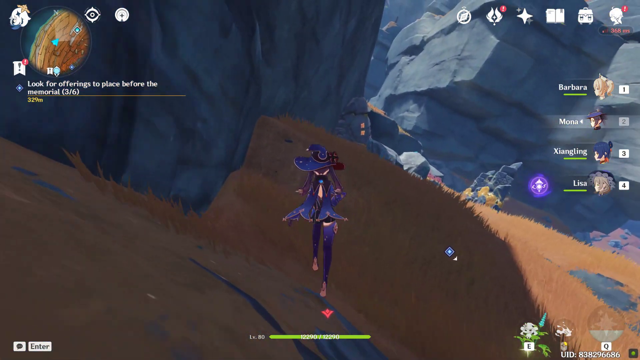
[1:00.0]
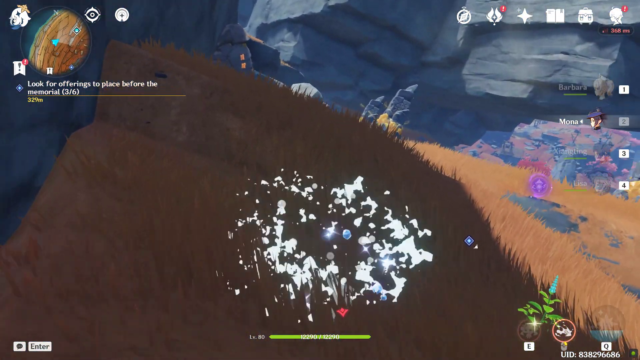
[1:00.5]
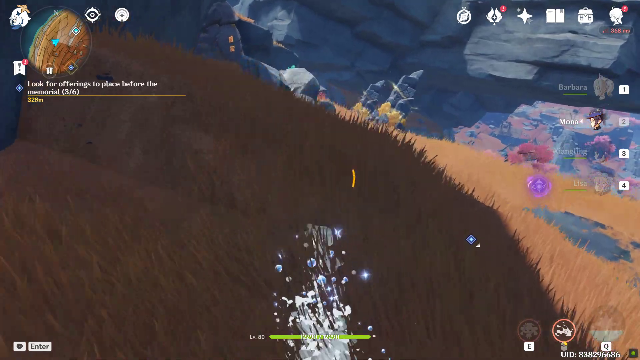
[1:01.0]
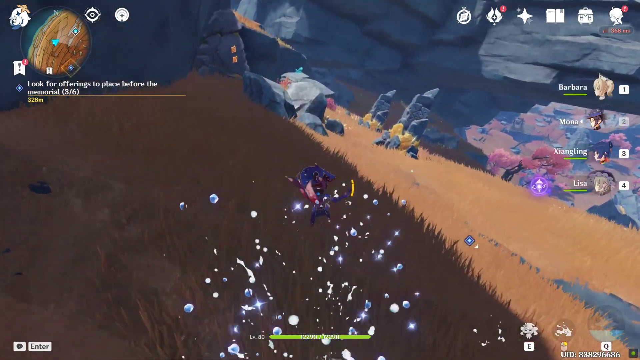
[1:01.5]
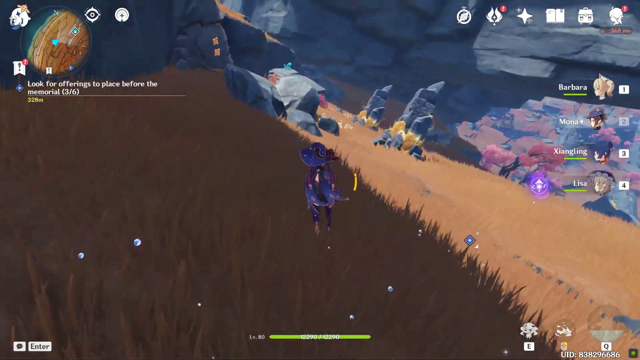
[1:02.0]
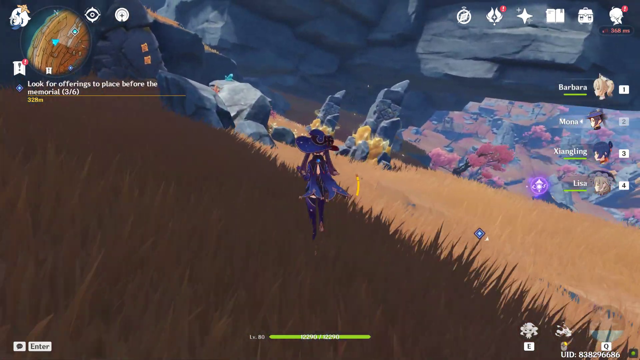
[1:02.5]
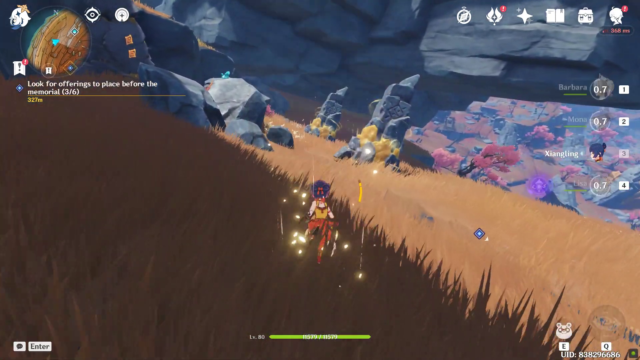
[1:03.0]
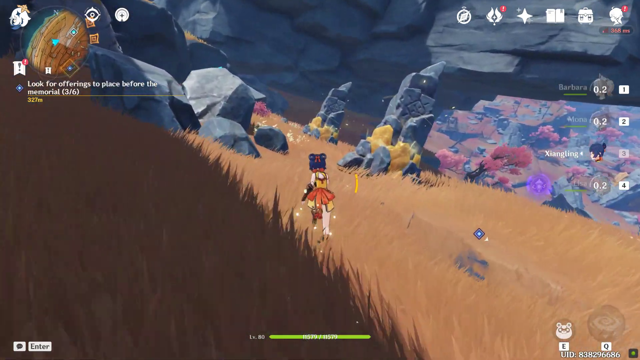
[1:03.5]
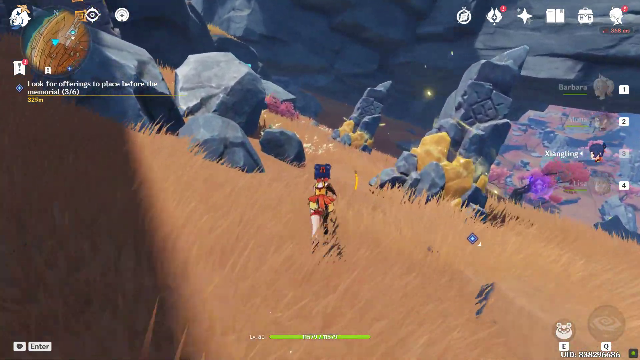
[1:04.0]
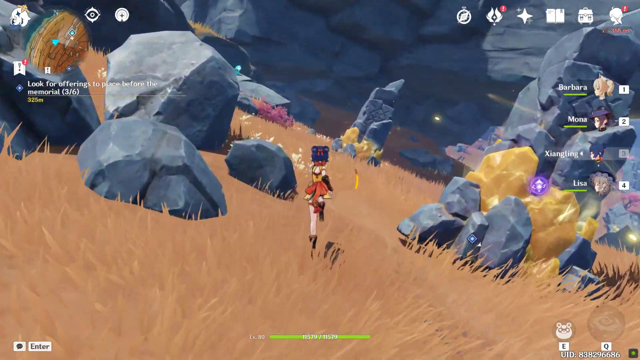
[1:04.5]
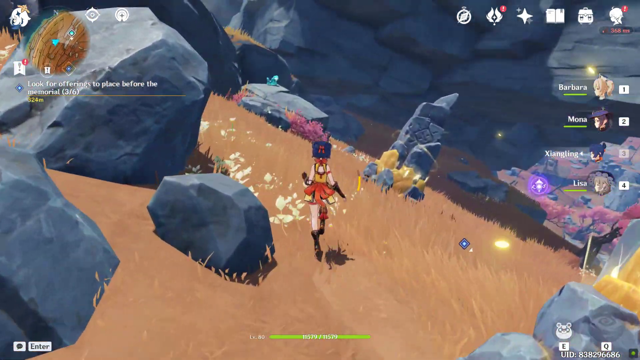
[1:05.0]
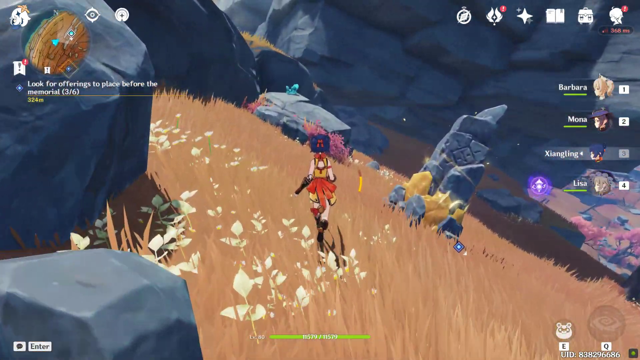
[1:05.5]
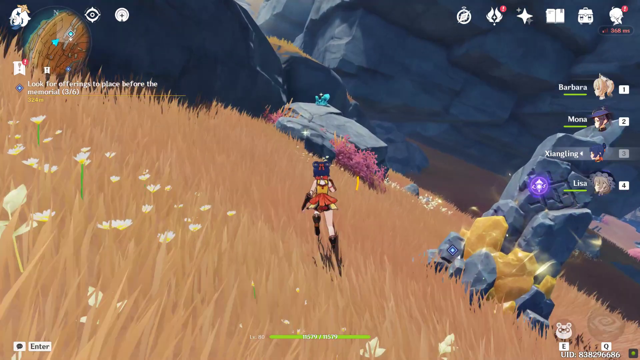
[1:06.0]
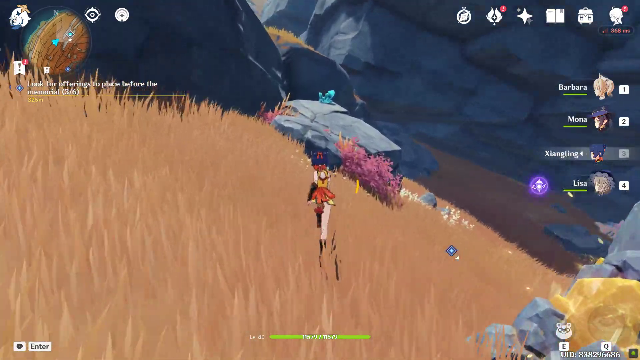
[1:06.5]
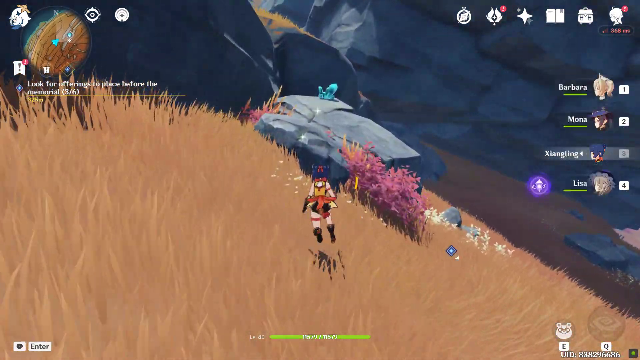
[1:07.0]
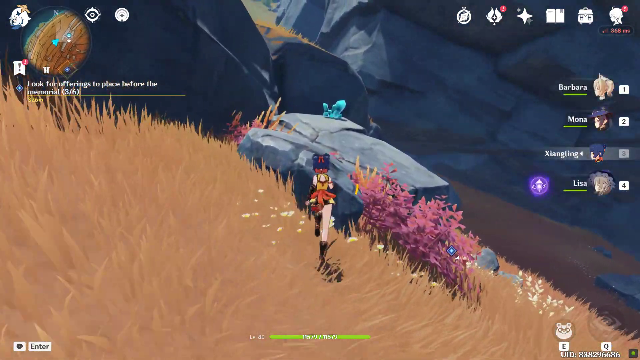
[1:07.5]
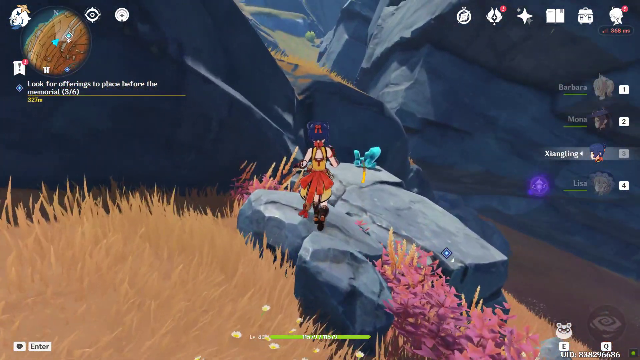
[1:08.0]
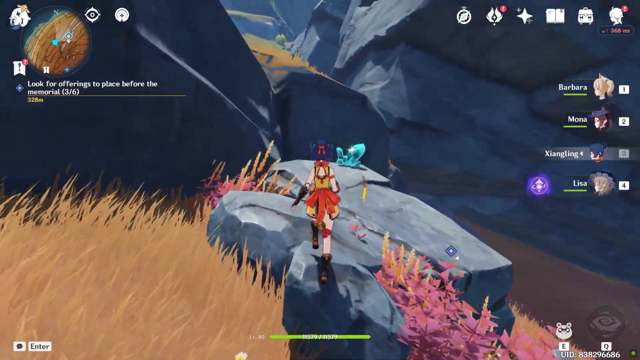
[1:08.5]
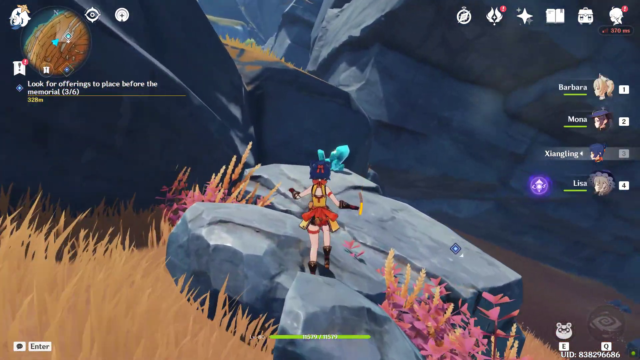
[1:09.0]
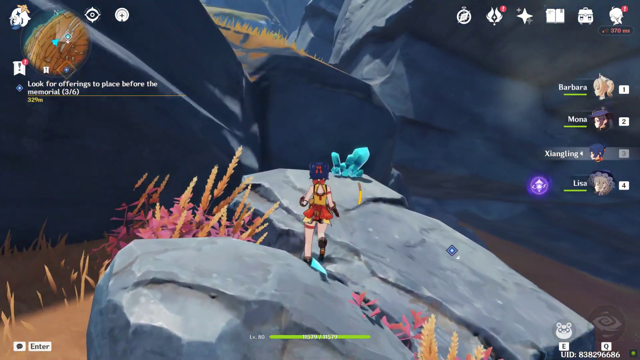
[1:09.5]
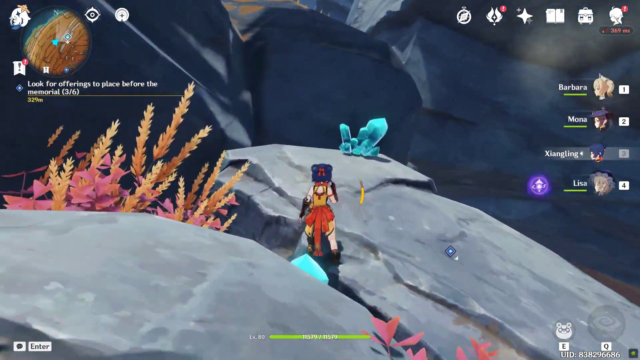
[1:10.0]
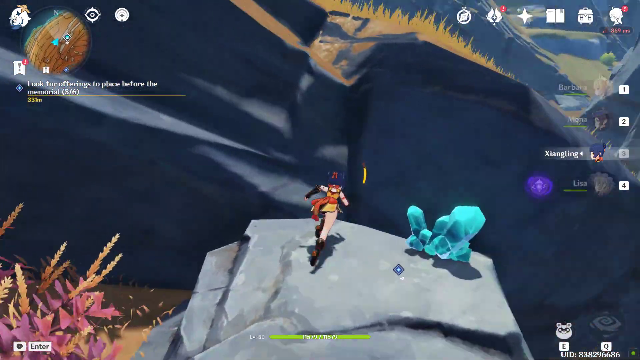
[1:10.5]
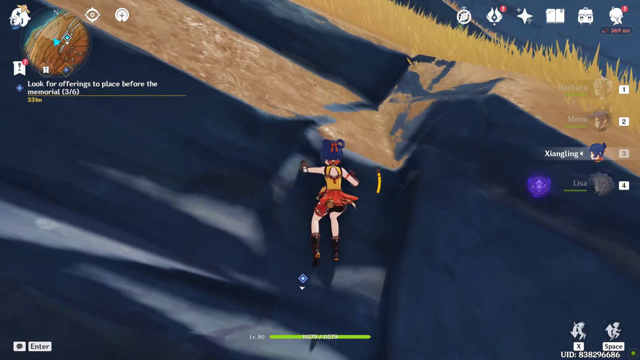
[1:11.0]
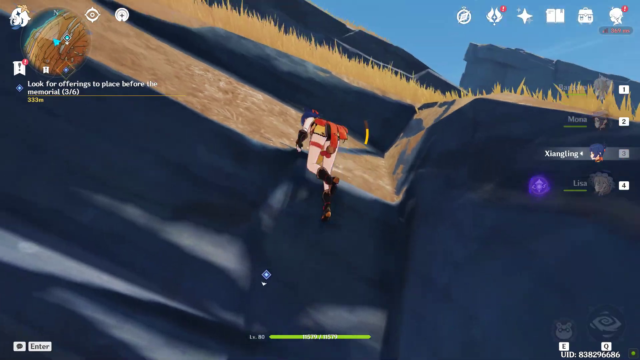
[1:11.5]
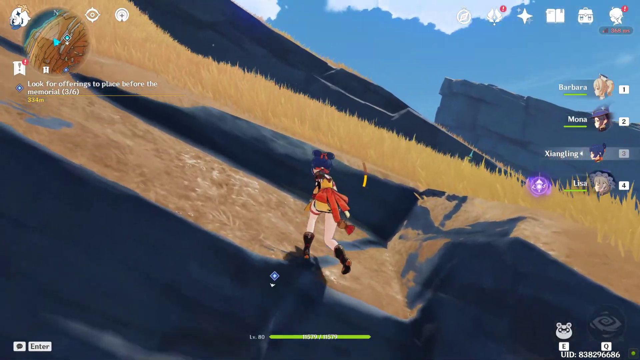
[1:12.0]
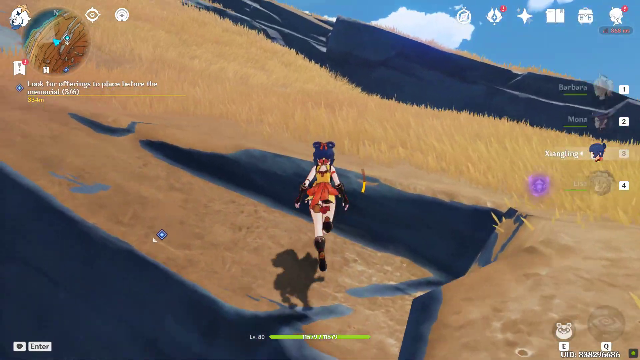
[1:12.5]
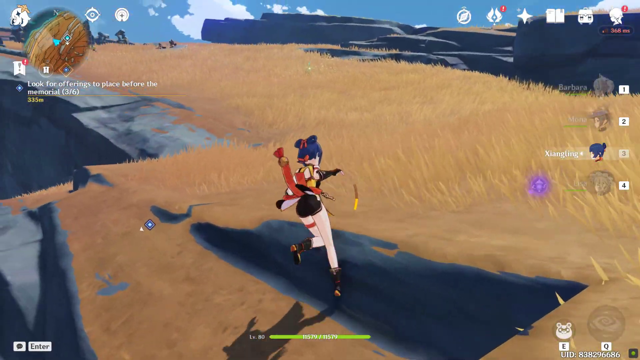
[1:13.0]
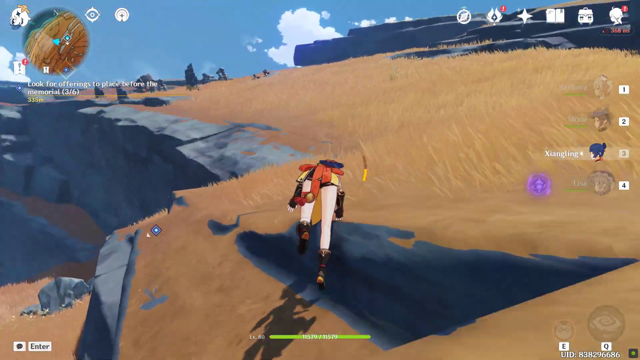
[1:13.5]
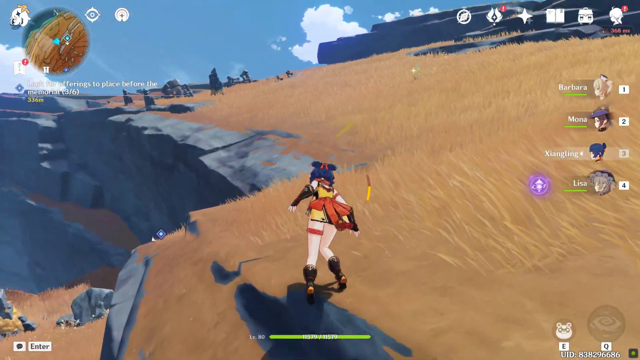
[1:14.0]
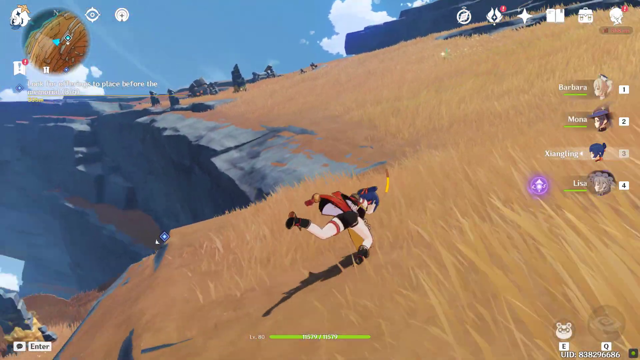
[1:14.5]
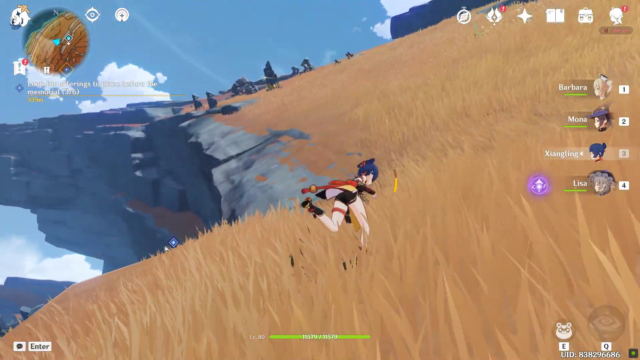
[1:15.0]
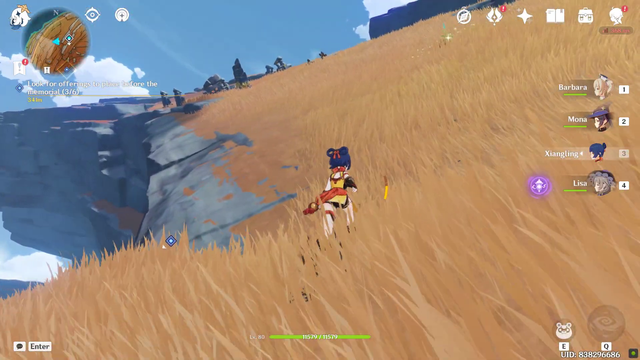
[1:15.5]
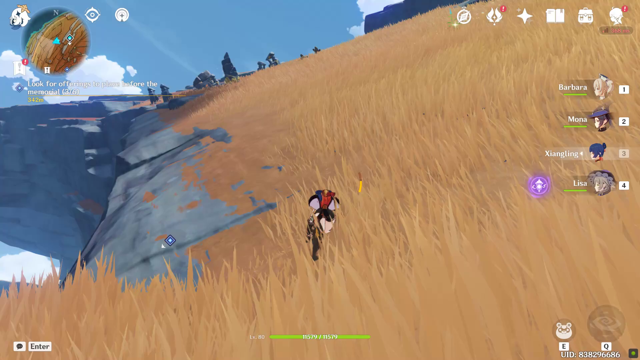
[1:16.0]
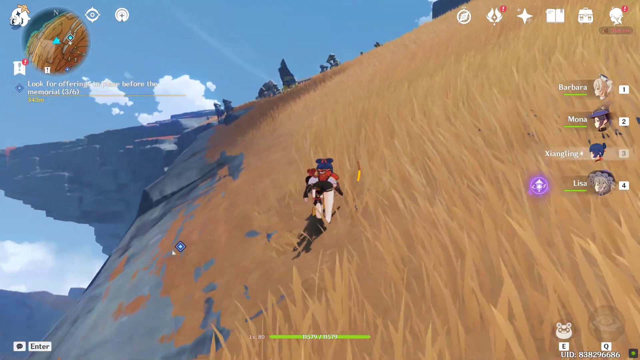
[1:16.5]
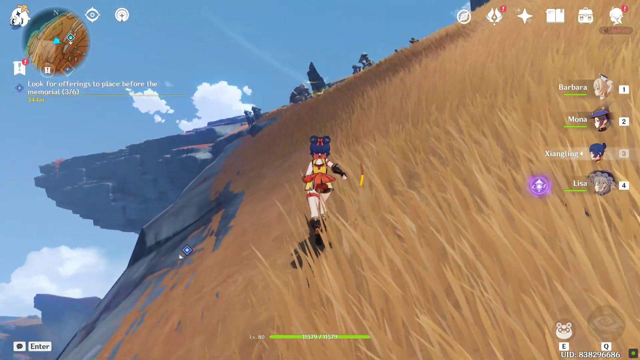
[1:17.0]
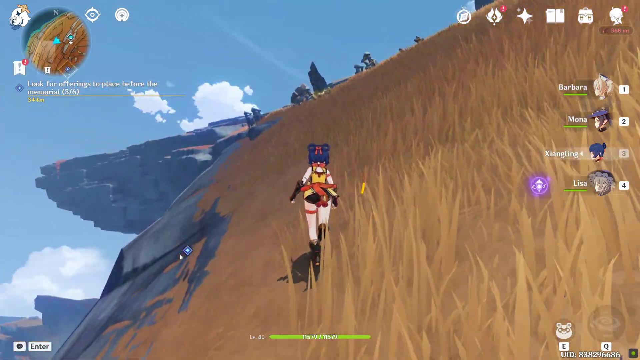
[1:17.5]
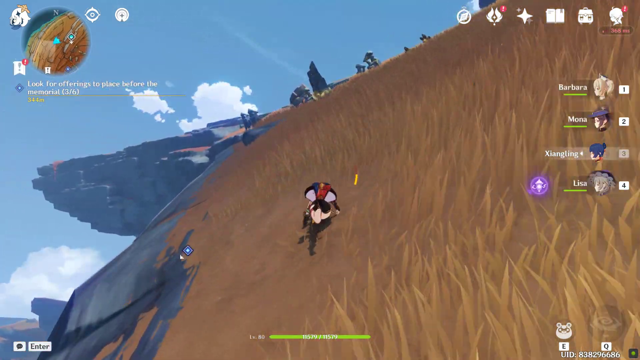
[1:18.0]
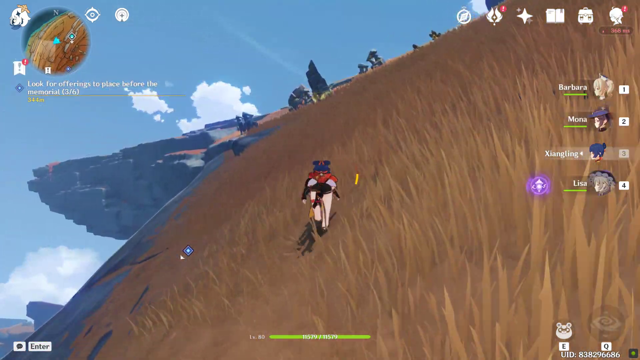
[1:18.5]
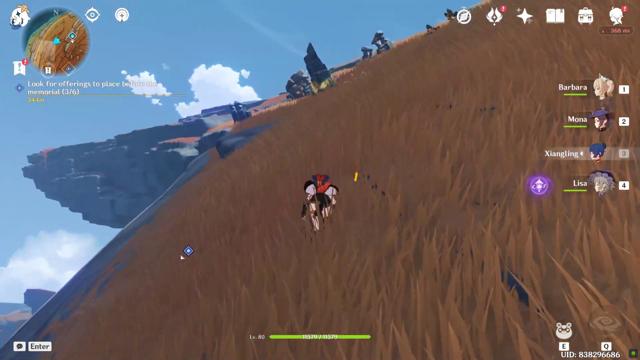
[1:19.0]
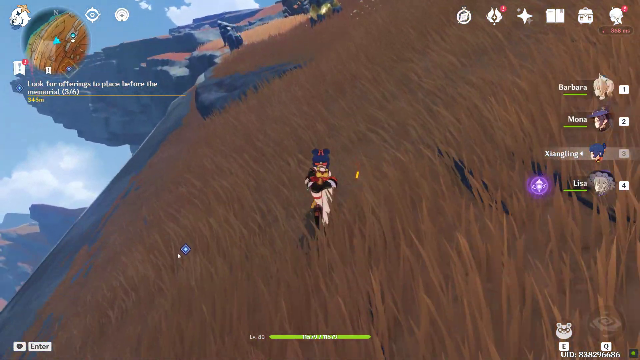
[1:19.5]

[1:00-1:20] She slips underground again and comes back out with her outfit changed again, and the terrain has changed: it is now very rocky, with light brown soil. Her outfit has changed back, so she again wears the yellow shirt with brown gloves and brown boots, and something like an orange bonnet over her rear. The terrain appears to have crystals in places. She jumps up onto a rock, blue crystals are visible, and she enters an area of yellow grass and brown soil, still running. On the right four characters are shown: the first has blonde hair and is labelled "Barbara", the second is Misha with brown hair, the one currently playing has the blue hair and is Xiaoling, and the fourth, with ash-blonde hair, is called Lisa.